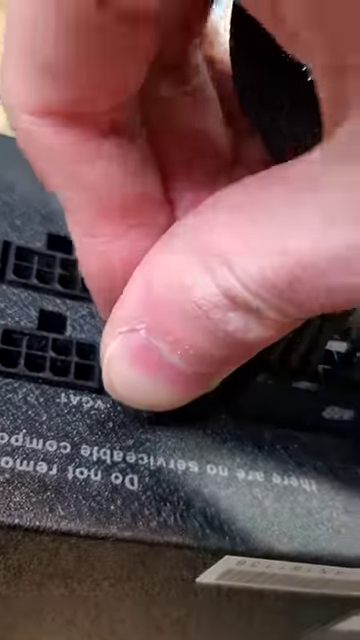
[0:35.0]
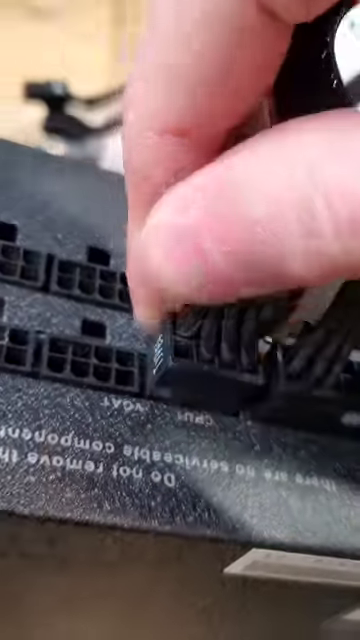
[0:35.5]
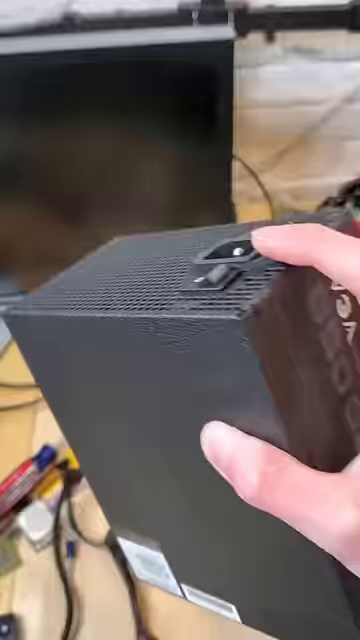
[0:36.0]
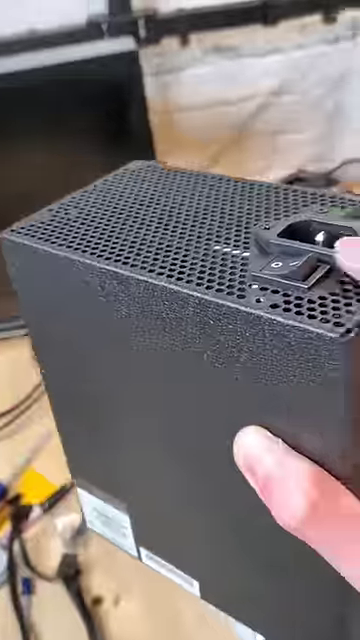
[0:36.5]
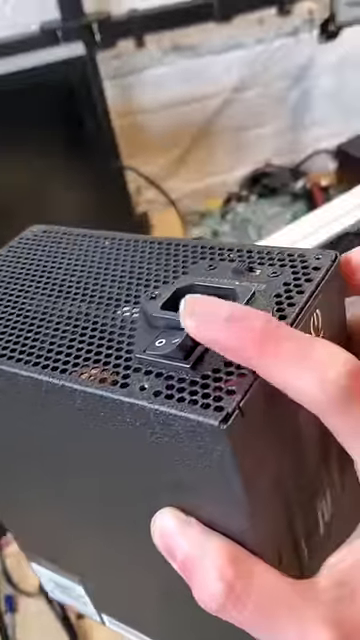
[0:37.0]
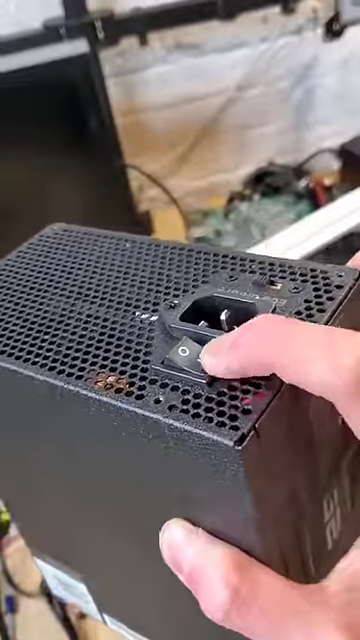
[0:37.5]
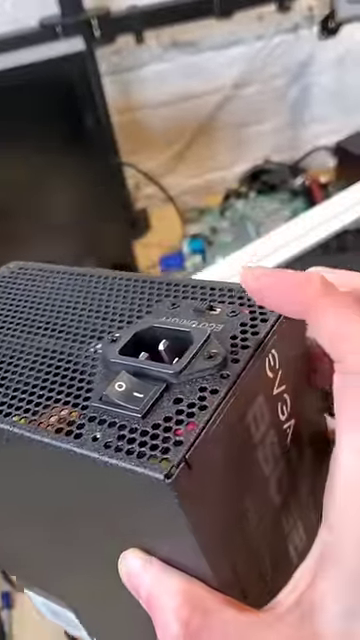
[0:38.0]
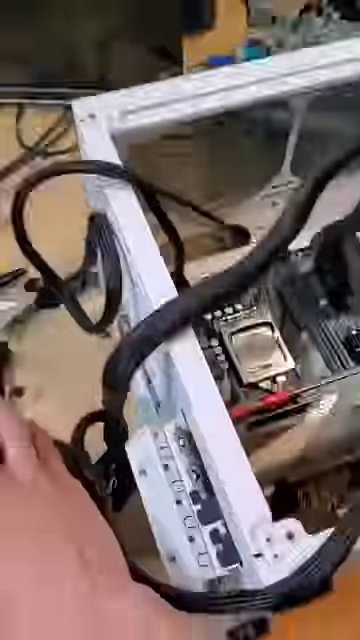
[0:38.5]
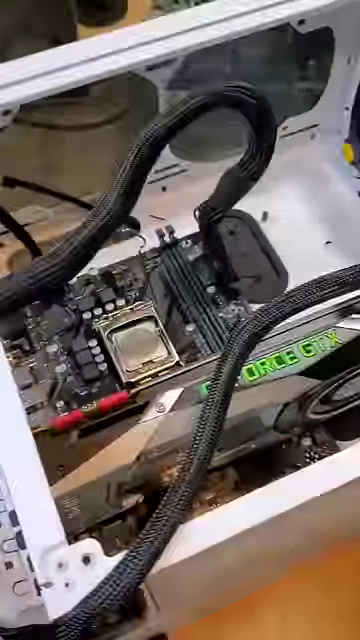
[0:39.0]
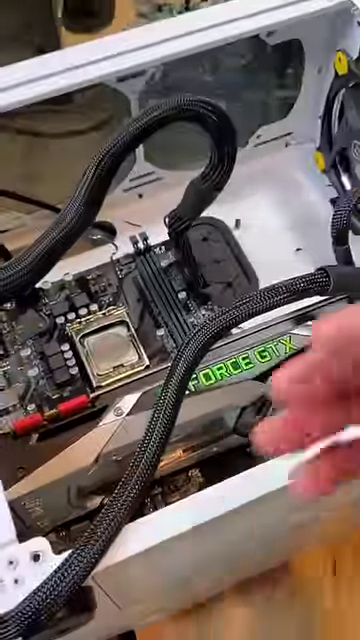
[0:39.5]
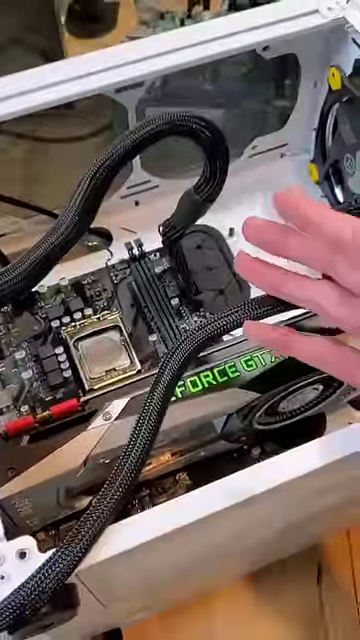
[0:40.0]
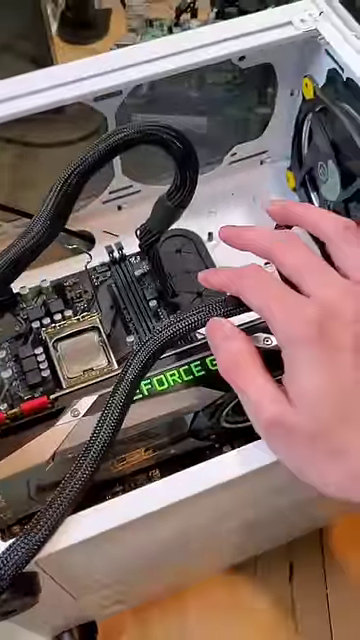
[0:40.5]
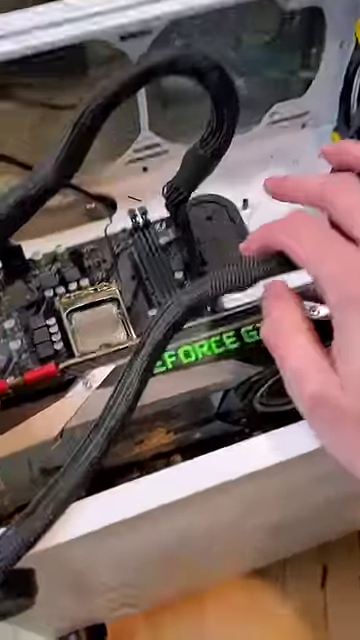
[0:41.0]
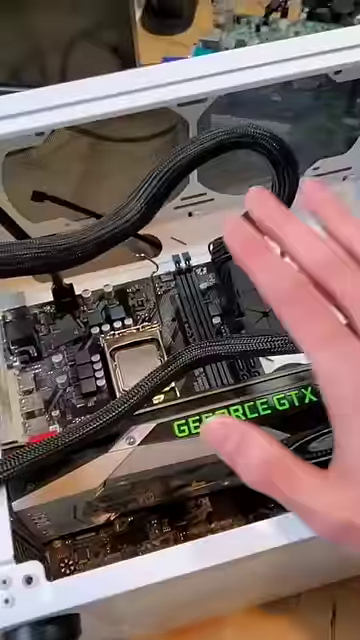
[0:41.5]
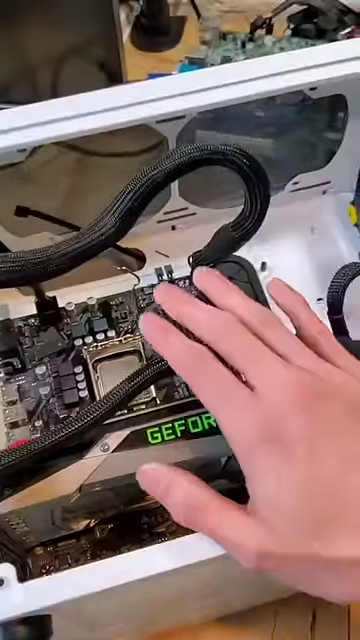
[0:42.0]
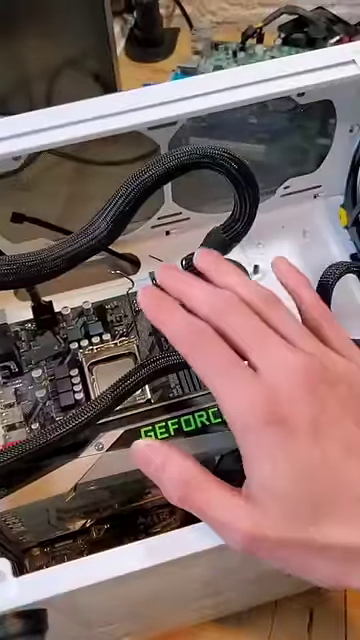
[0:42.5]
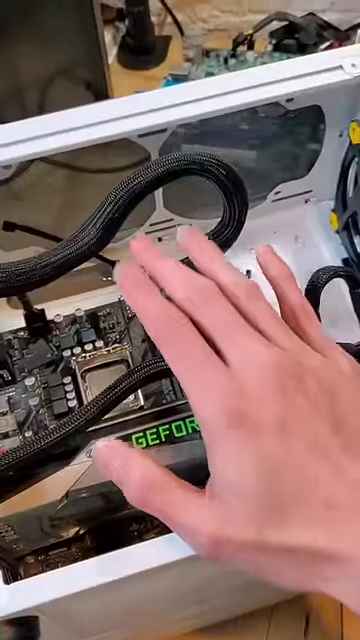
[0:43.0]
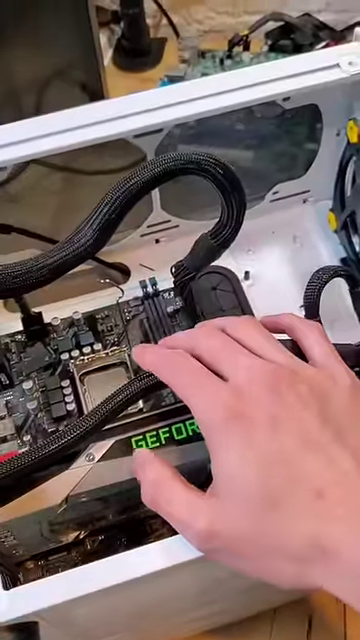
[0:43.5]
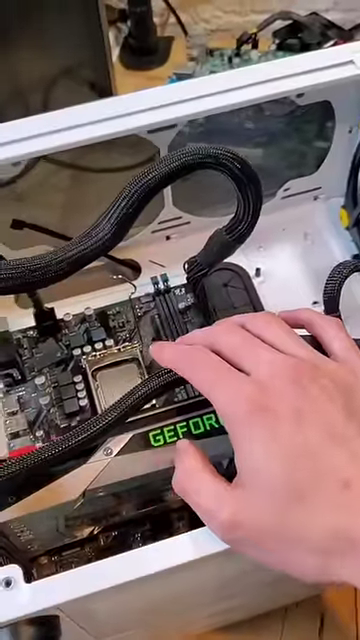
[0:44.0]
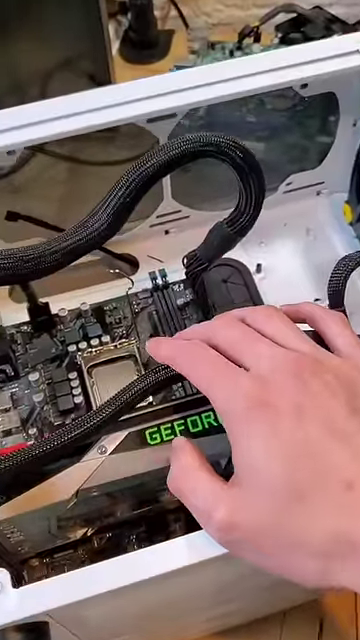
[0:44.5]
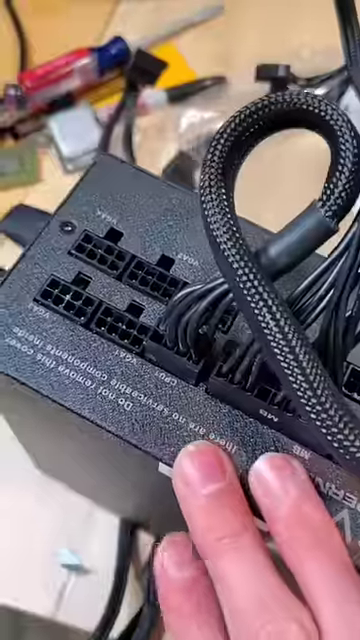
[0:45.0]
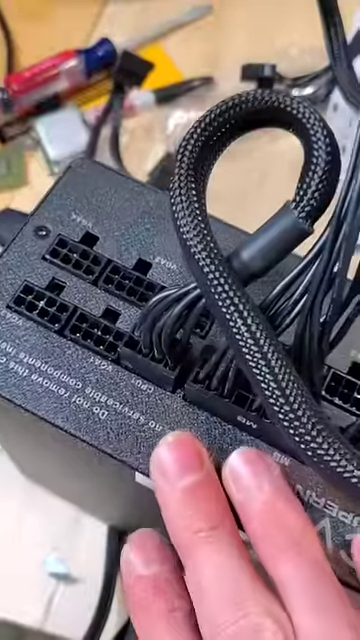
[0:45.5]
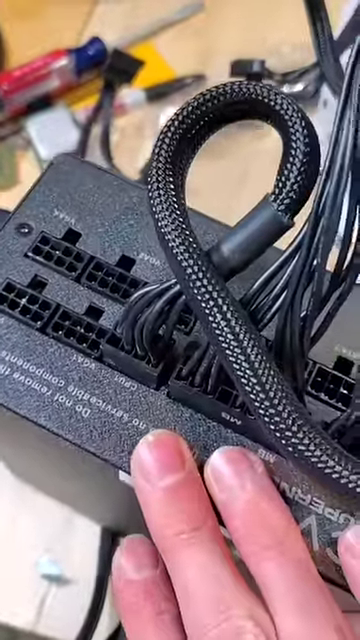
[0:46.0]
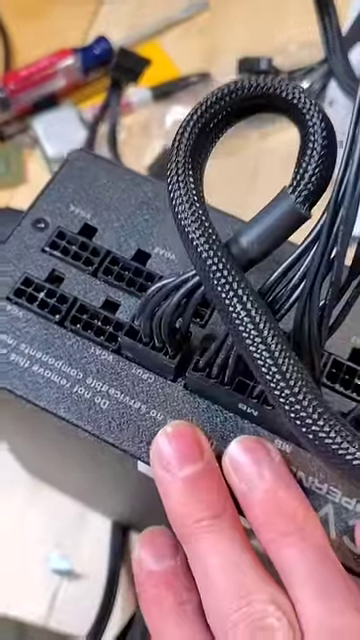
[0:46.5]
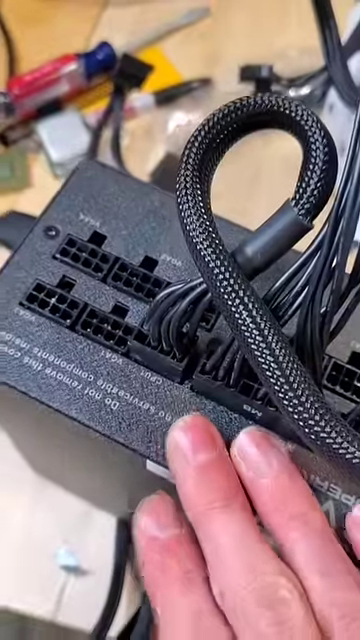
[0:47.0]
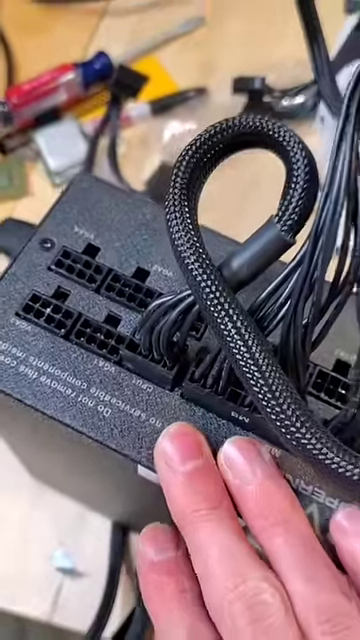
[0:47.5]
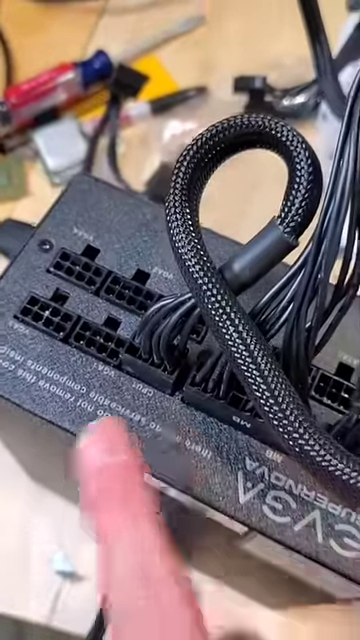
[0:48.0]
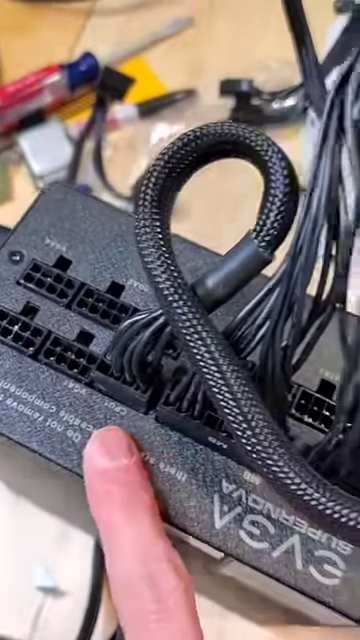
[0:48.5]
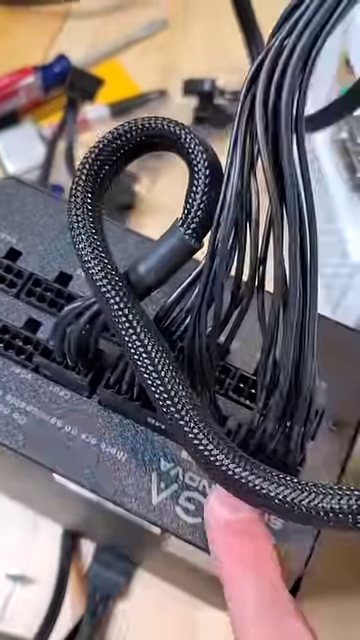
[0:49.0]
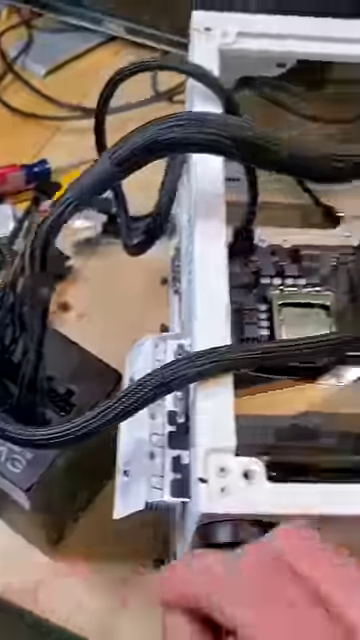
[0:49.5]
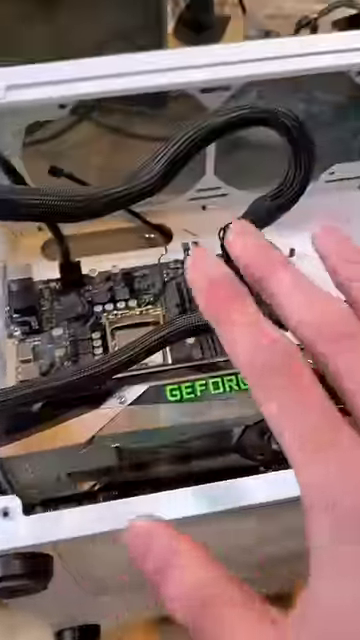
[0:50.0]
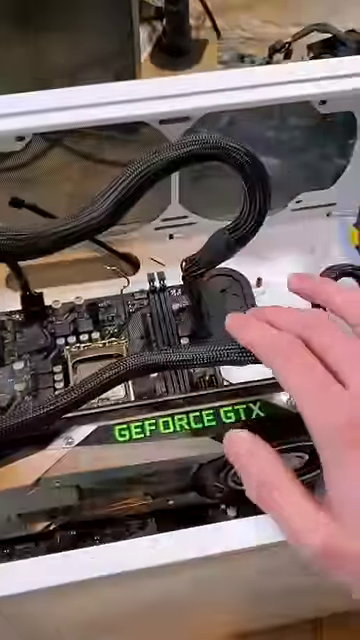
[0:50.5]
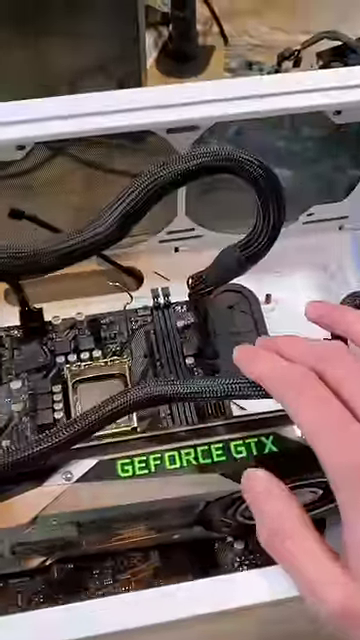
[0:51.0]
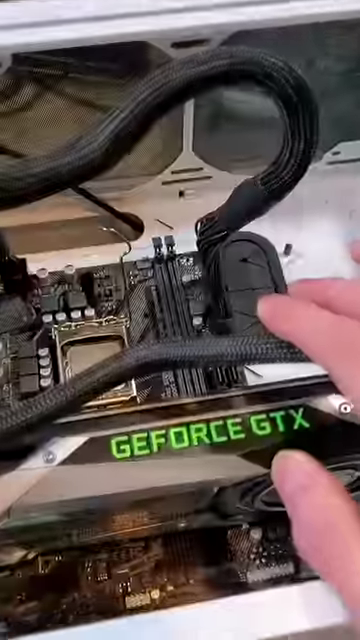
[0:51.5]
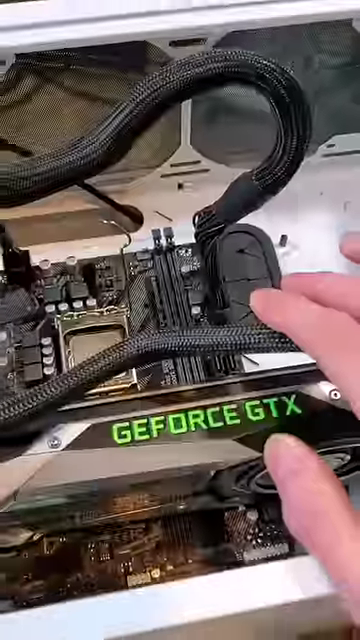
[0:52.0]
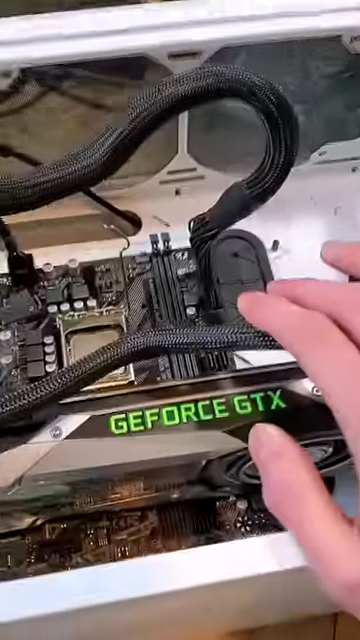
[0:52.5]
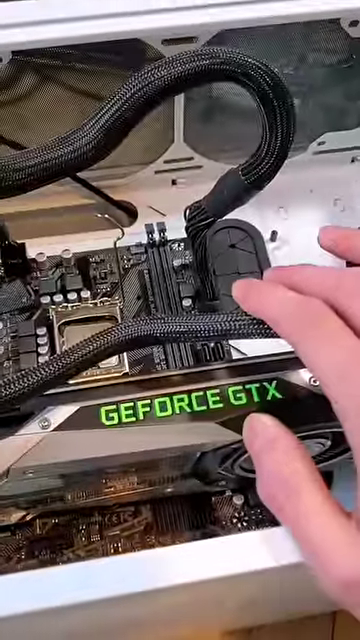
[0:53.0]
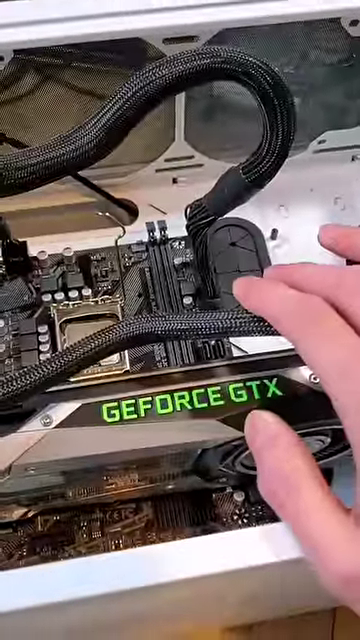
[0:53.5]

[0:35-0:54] The video continues in the same style, without the man's face in view. His hands move around, holding different parts of his computer and gesturing to them, and he keeps showing the power supply. He plugs things in and out and shows how to turn the power supply on and off, so it seems to be the main item in this part of the video. He zooms around showing things about his computer.